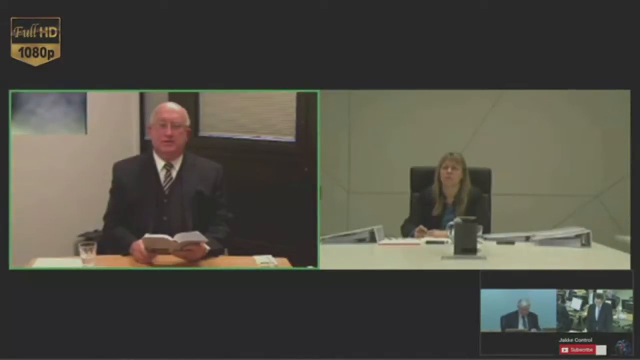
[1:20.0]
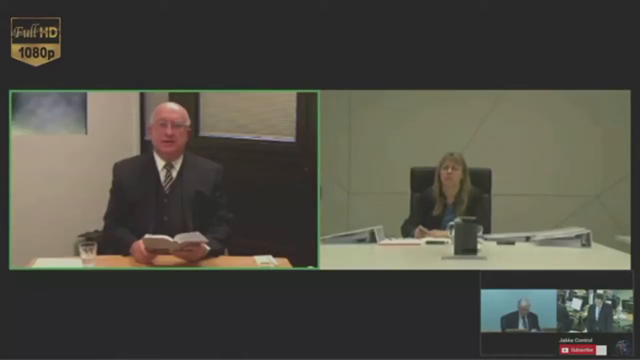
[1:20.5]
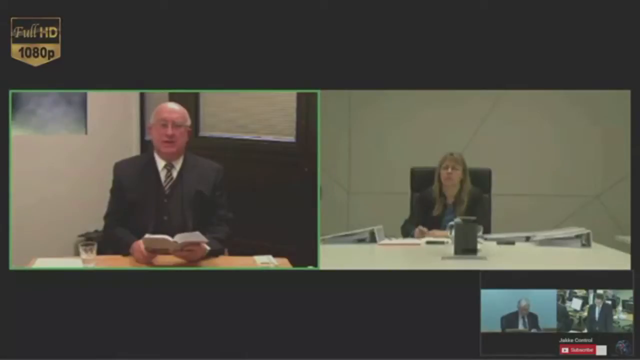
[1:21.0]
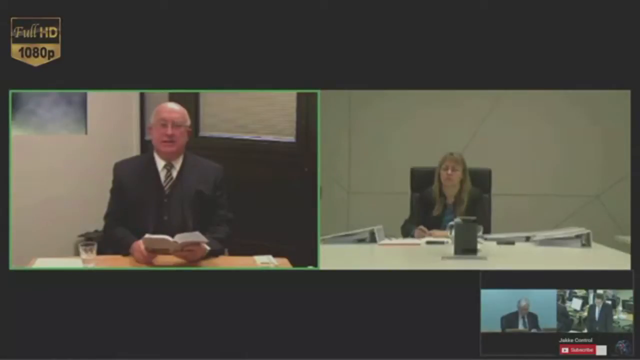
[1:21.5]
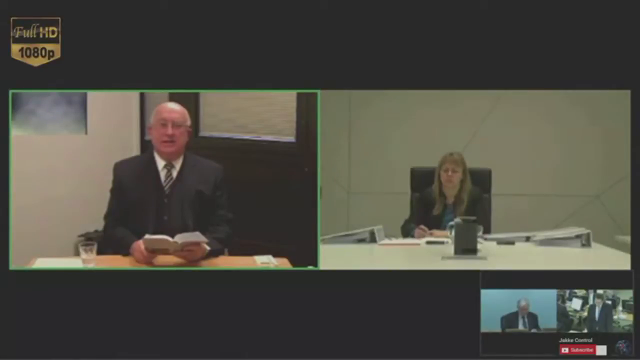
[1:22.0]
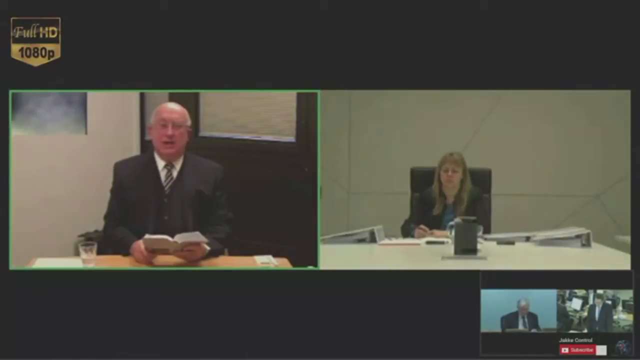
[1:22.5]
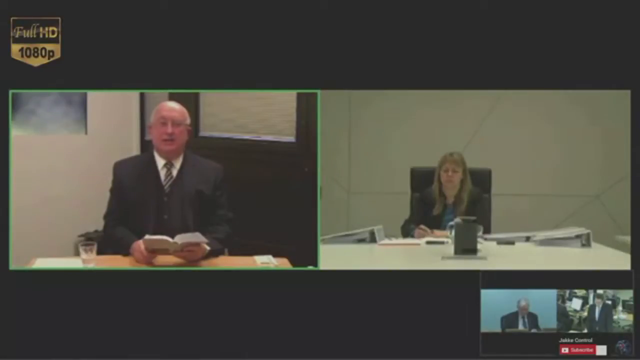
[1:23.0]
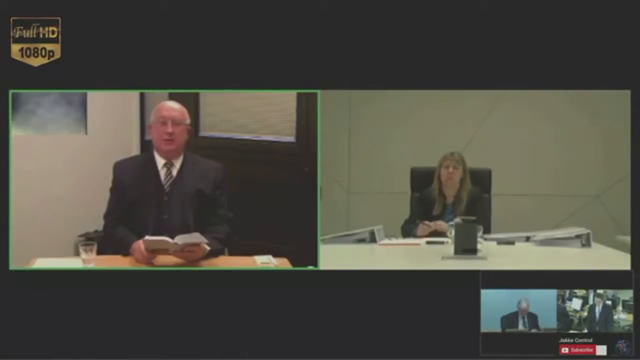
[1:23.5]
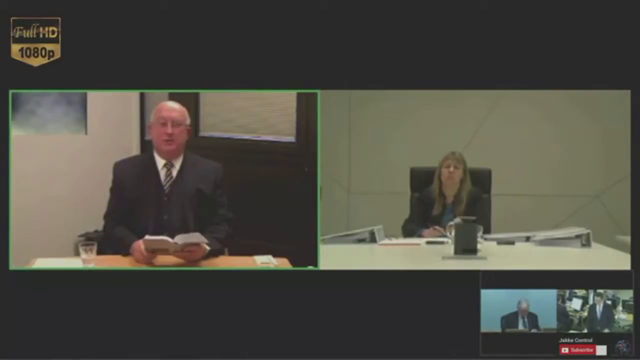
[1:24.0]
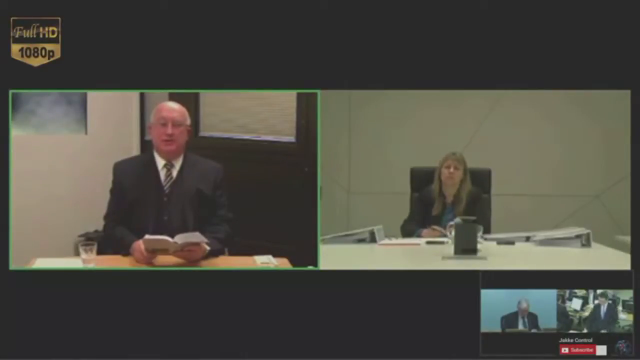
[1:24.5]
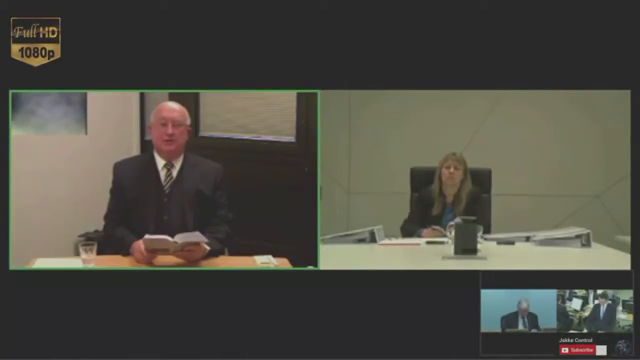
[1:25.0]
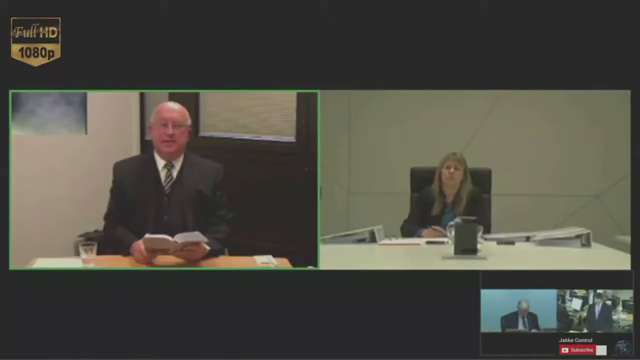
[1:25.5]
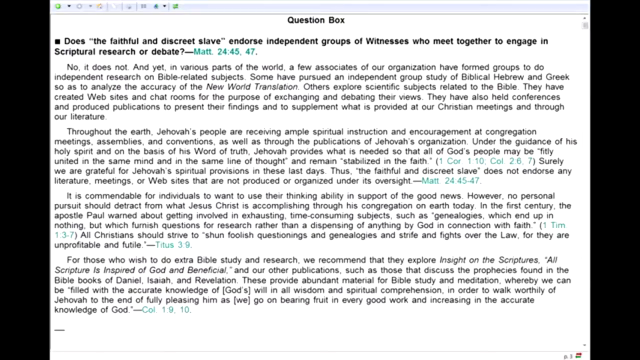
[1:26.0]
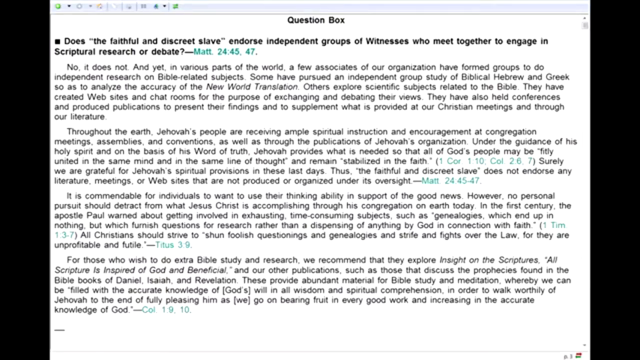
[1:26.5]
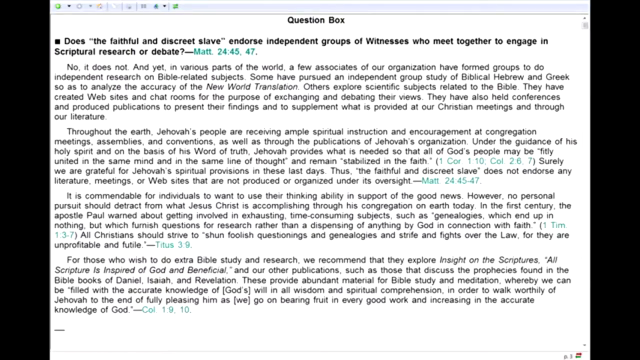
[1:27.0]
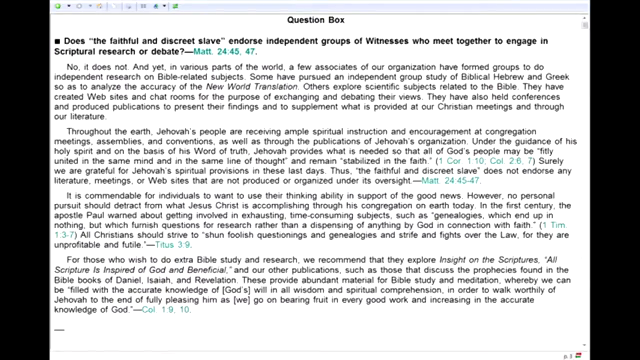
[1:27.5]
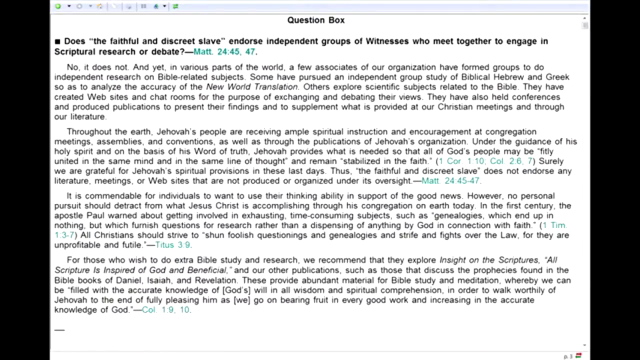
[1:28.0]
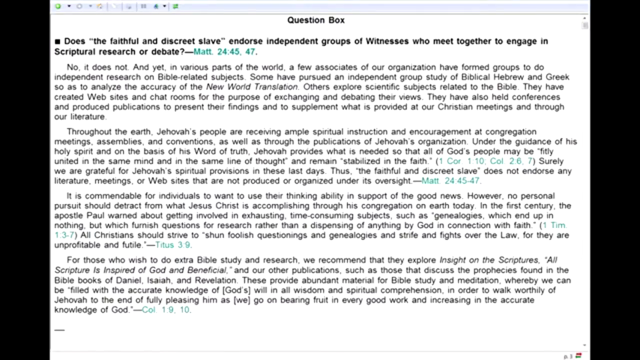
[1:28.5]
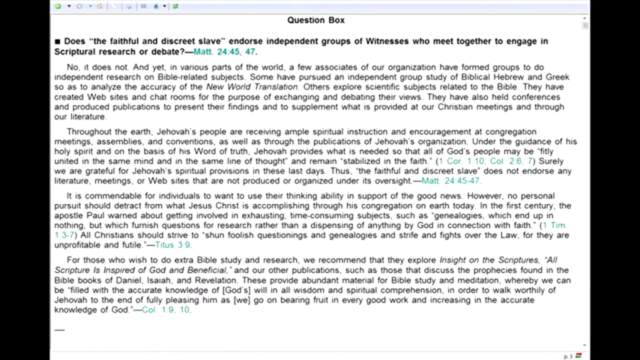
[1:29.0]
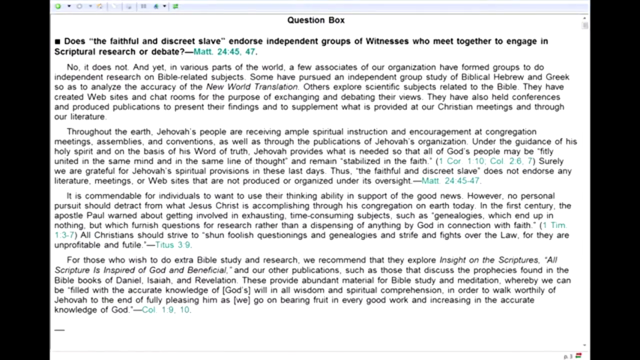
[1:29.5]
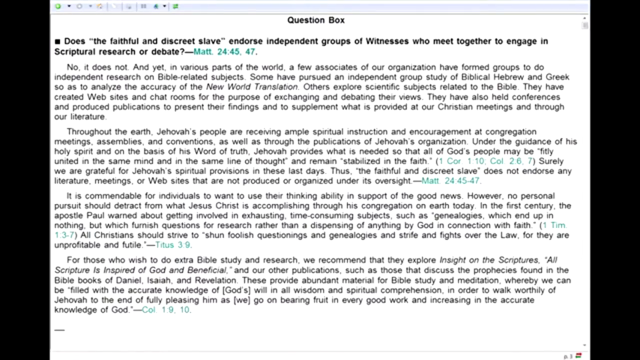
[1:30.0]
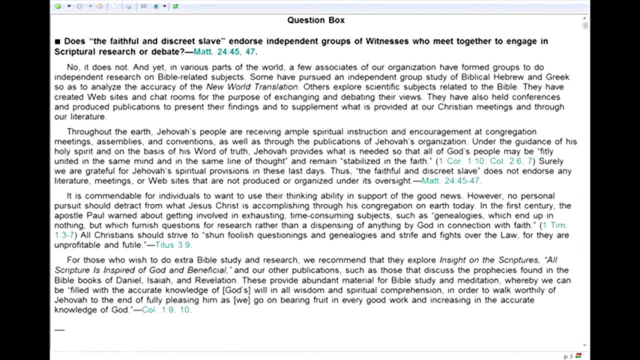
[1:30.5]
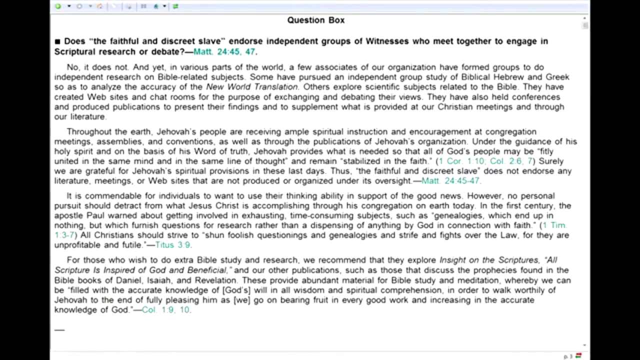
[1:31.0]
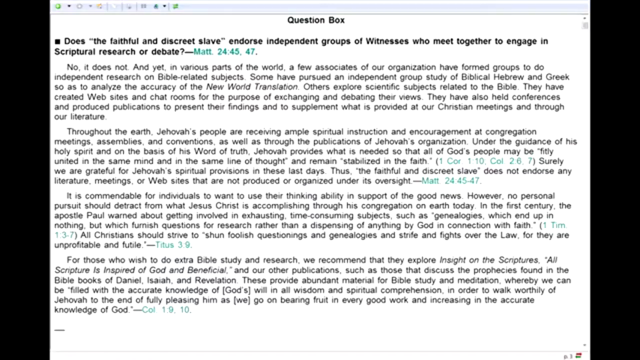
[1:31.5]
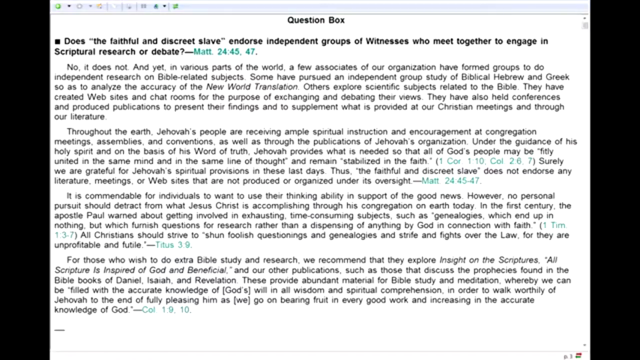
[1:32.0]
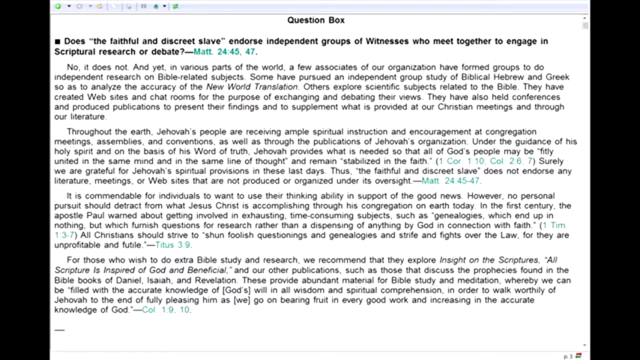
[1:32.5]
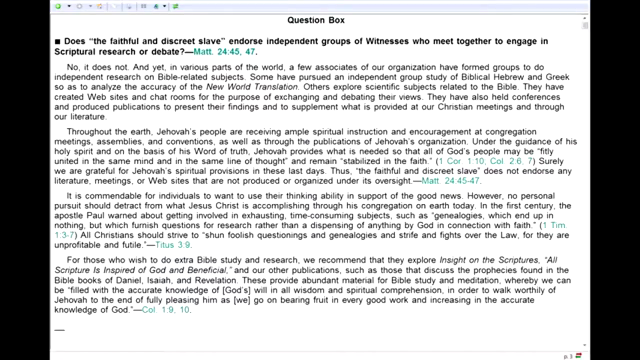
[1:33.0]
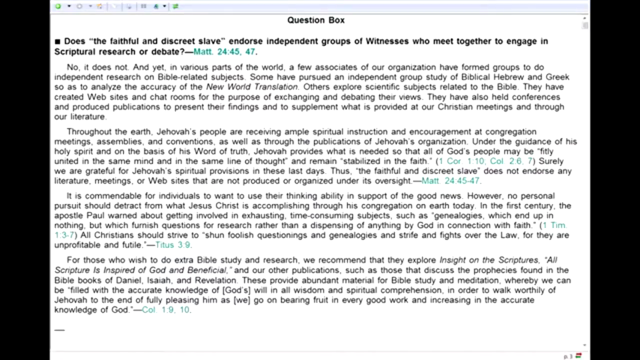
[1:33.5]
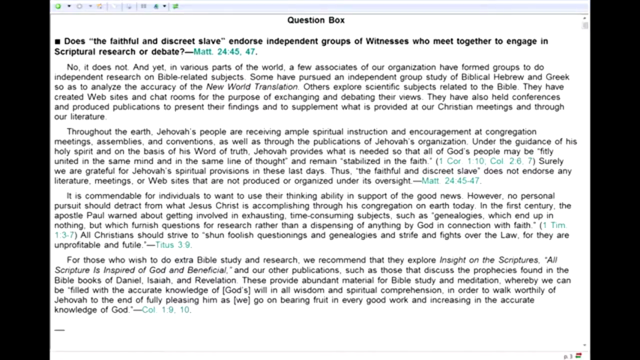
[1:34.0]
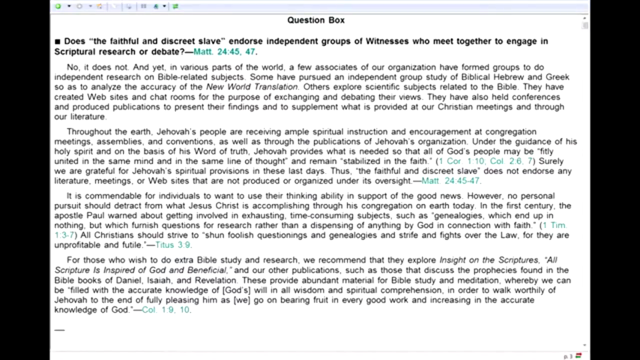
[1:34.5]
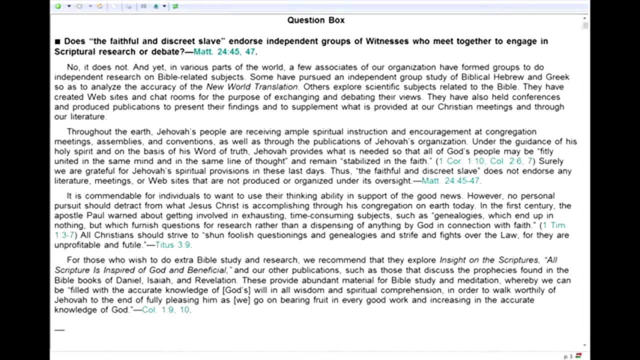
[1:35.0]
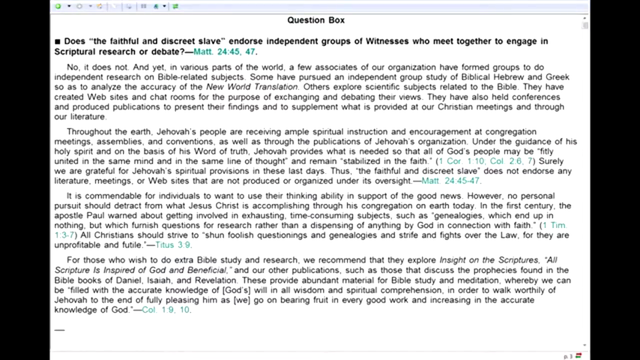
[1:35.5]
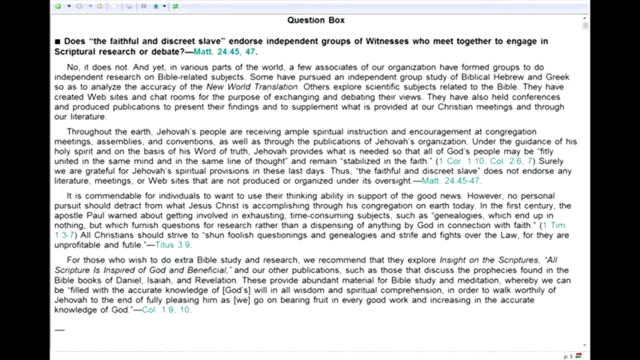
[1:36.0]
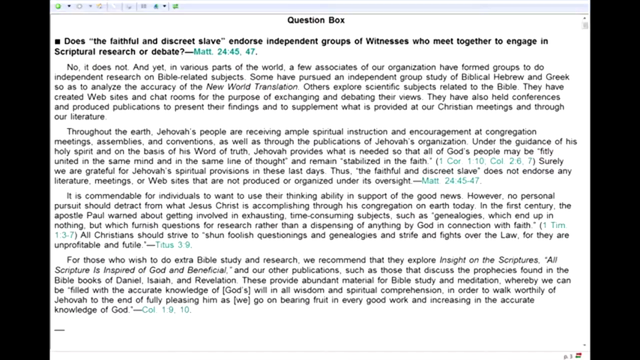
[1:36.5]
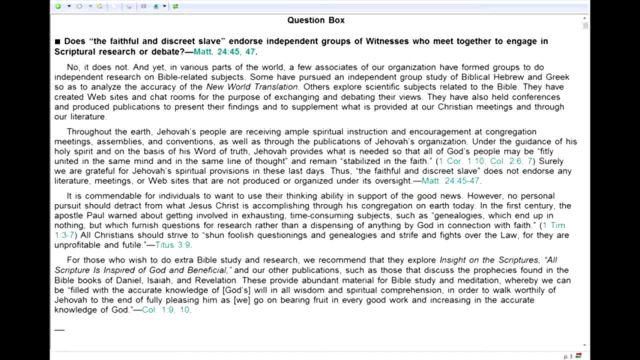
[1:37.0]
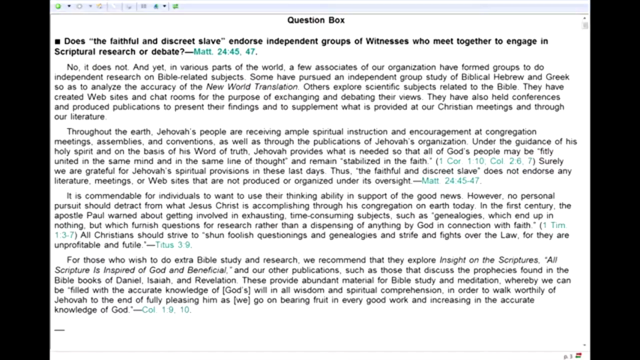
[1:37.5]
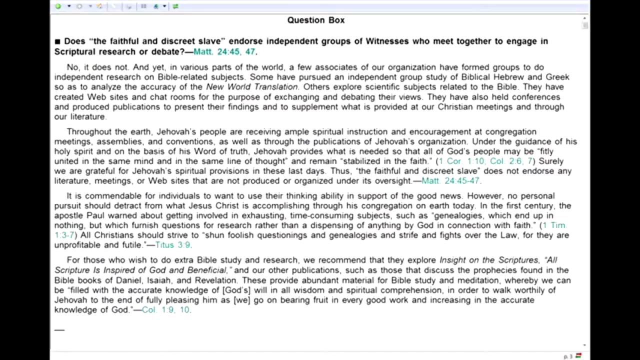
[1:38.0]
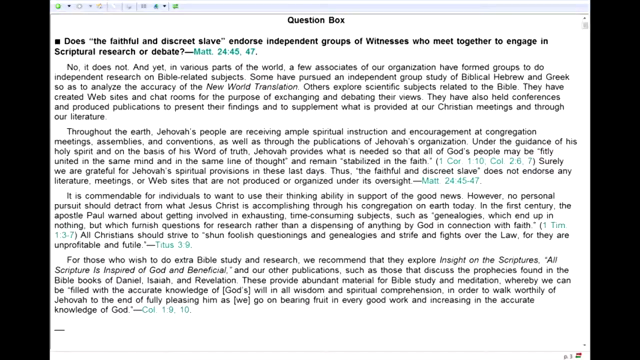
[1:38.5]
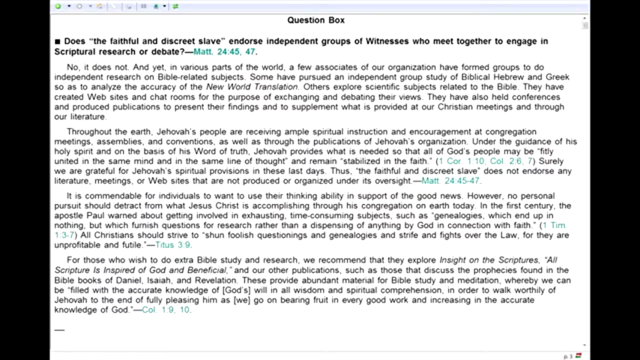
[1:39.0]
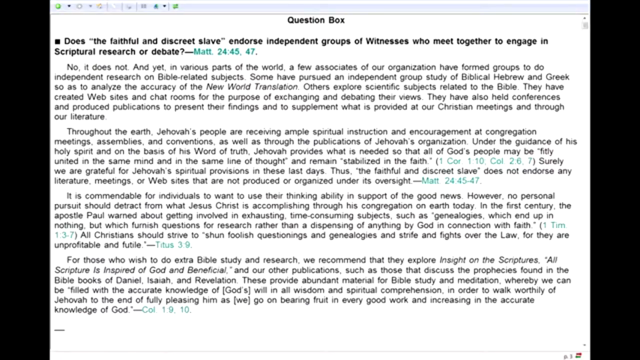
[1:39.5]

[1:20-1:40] The split-screen video shows the man on the left and the woman on the right. In the top left corner is a square that peaks down a little at the bottom, with gold trim on the top and down the sides and a black rectangle that says "Full HD" in gold; underneath that is gold with "1080p" in black. In the bottom right corner, two more very small videos are playing. The man talks, static, looking straight ahead and barely moving his body. She shifts her hand a little in front of her, and it cuts to a computer screen labeled "Question Box" at the top. Underneath are two dark black lines of information, then four more paragraphs below with green at the end indicating the part of the Bible the text is from. It has a white background and a gray border across the top.